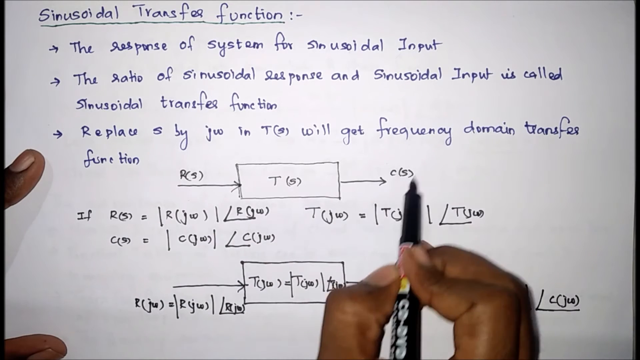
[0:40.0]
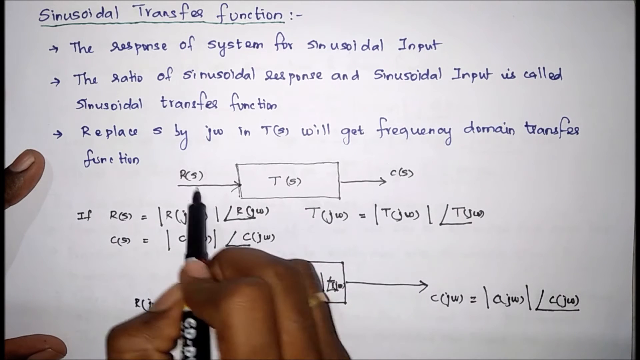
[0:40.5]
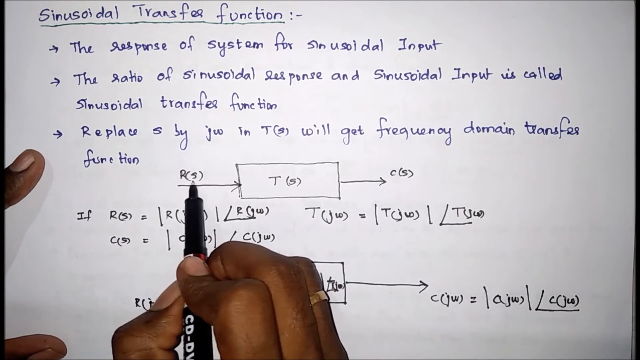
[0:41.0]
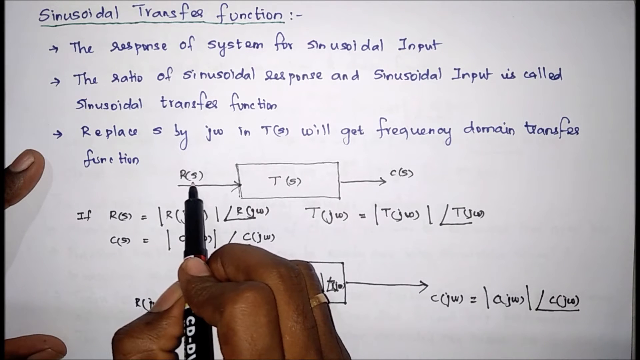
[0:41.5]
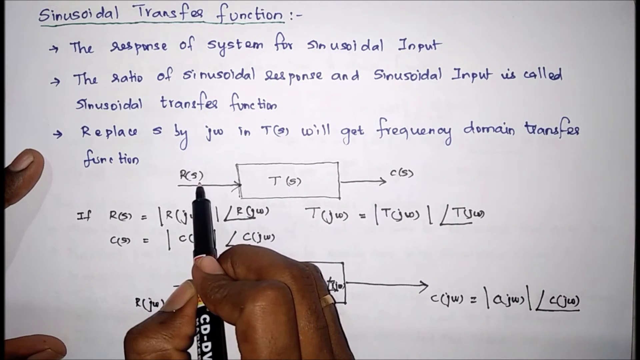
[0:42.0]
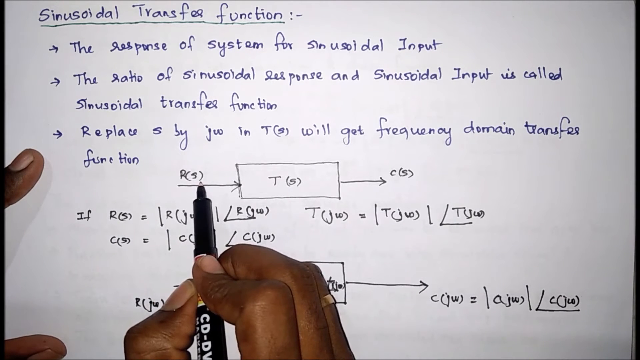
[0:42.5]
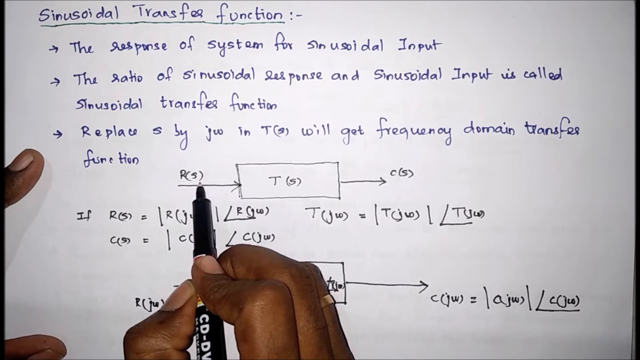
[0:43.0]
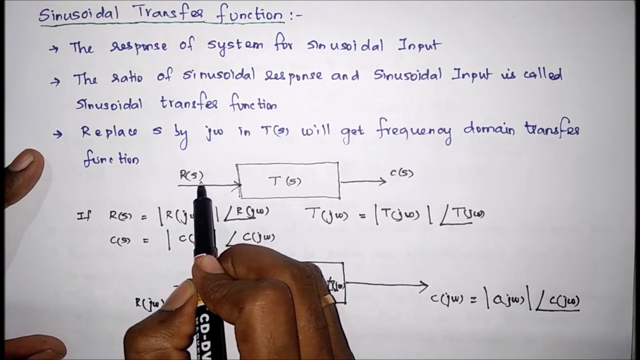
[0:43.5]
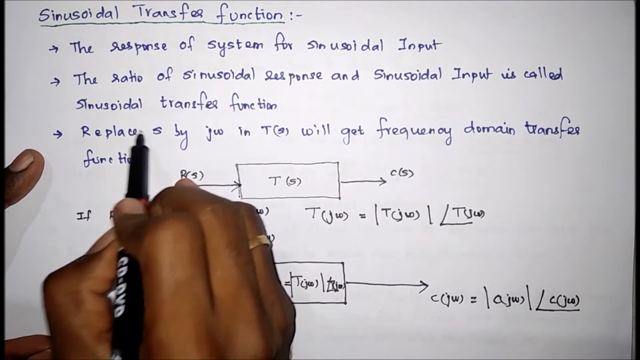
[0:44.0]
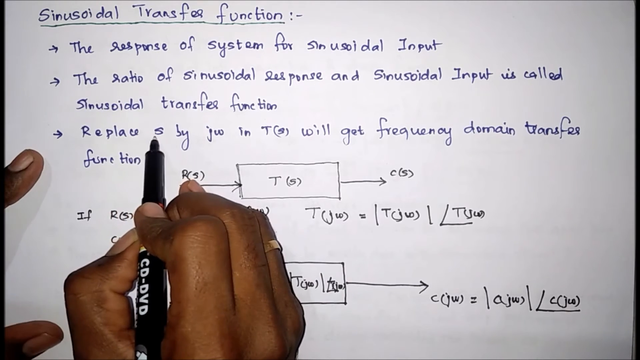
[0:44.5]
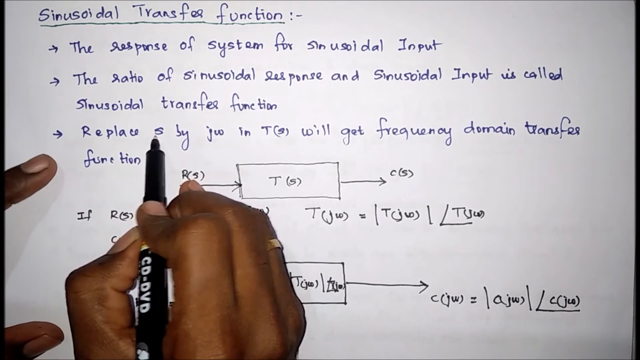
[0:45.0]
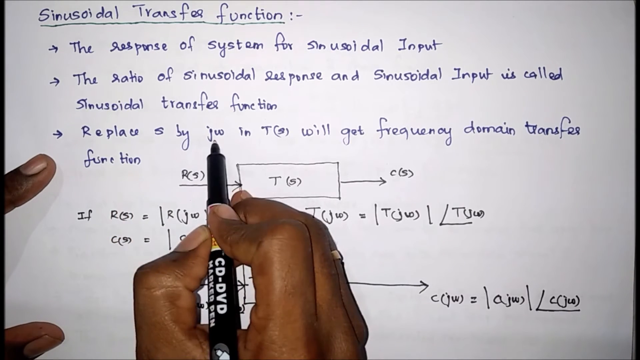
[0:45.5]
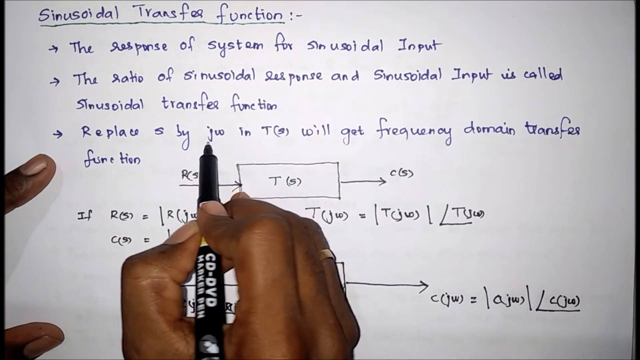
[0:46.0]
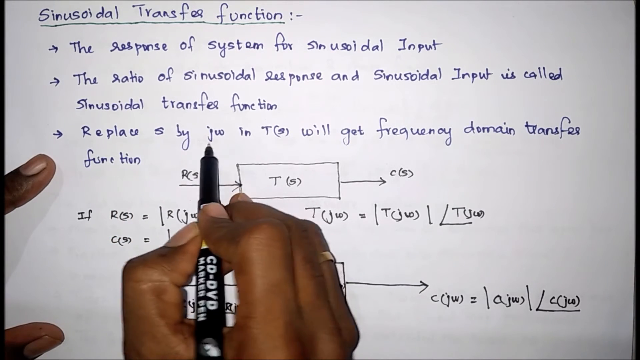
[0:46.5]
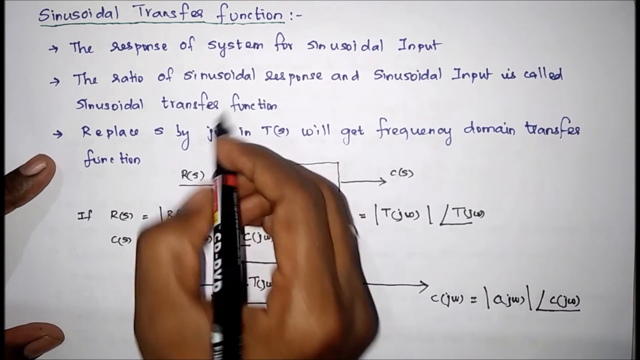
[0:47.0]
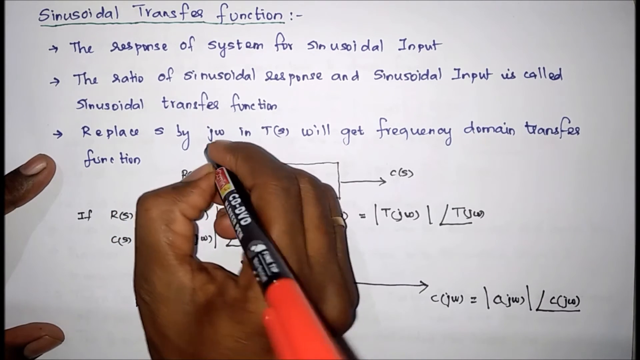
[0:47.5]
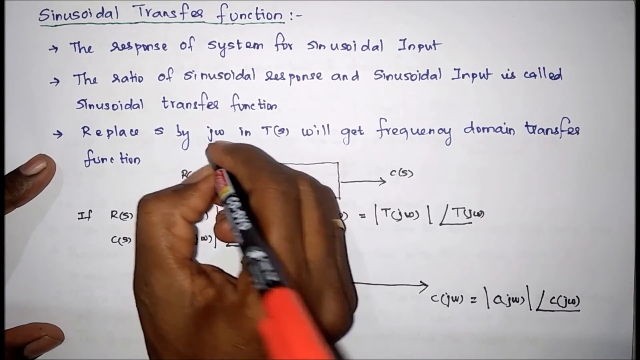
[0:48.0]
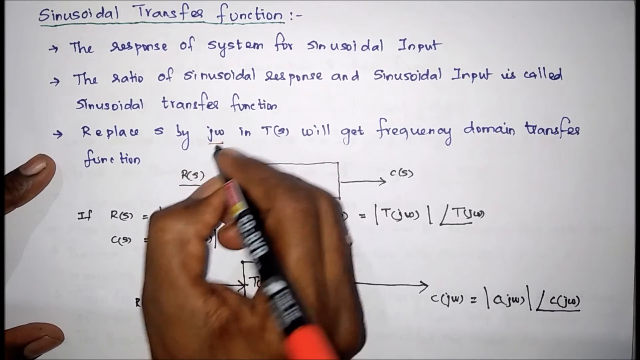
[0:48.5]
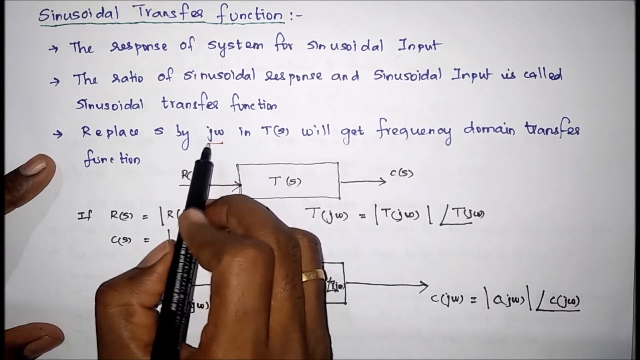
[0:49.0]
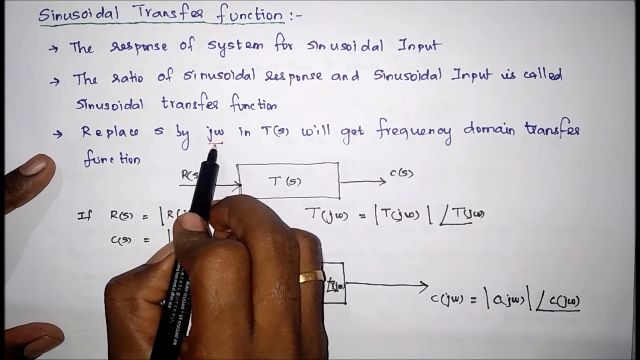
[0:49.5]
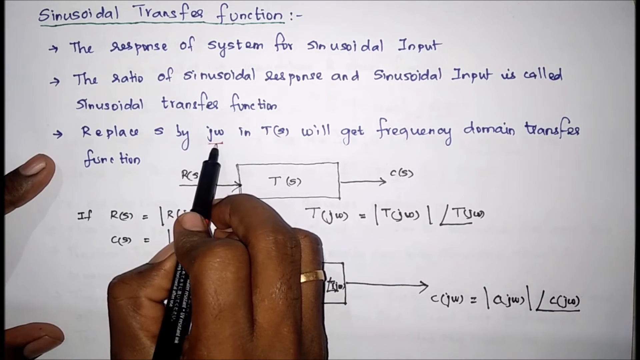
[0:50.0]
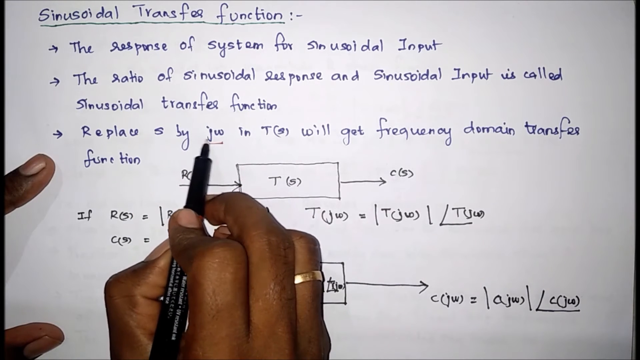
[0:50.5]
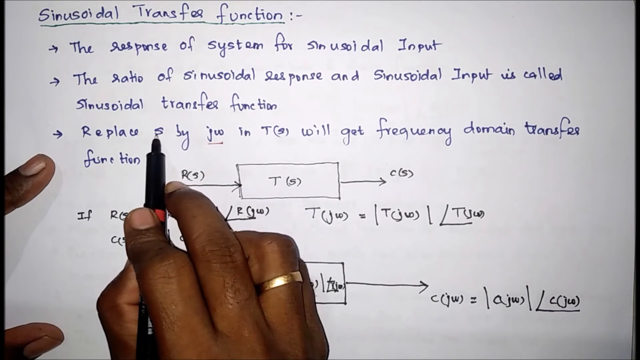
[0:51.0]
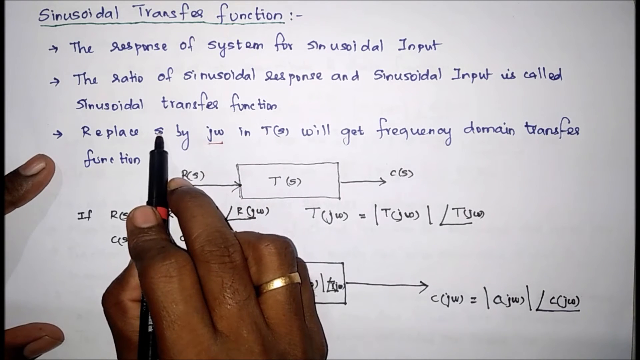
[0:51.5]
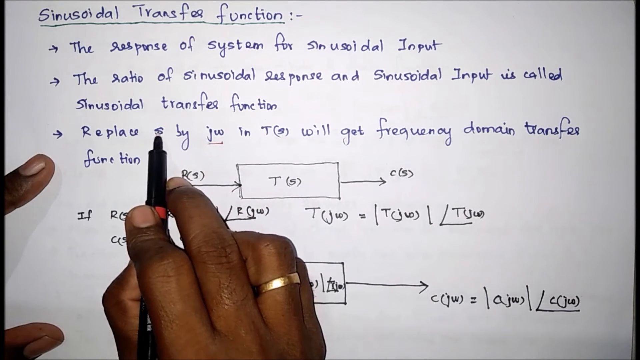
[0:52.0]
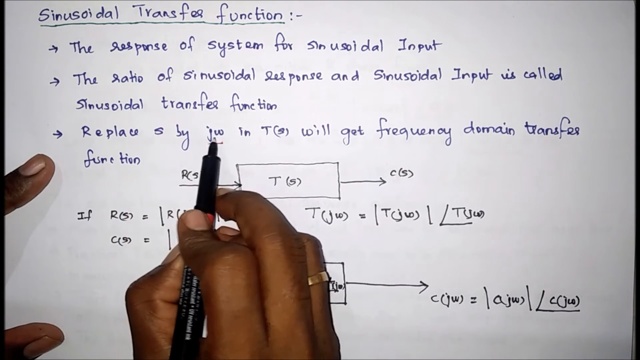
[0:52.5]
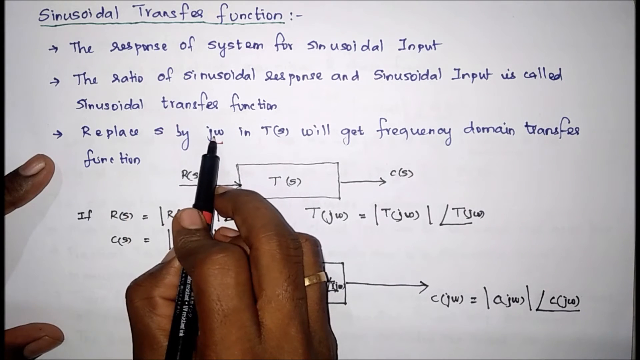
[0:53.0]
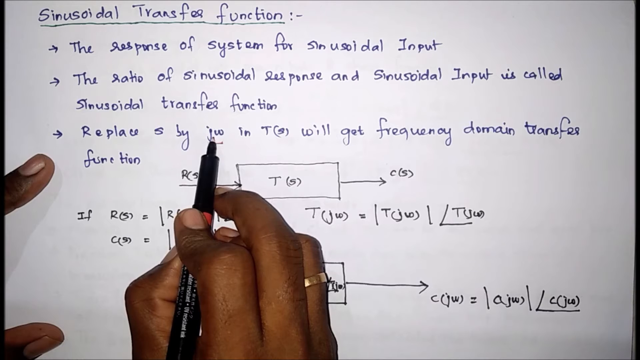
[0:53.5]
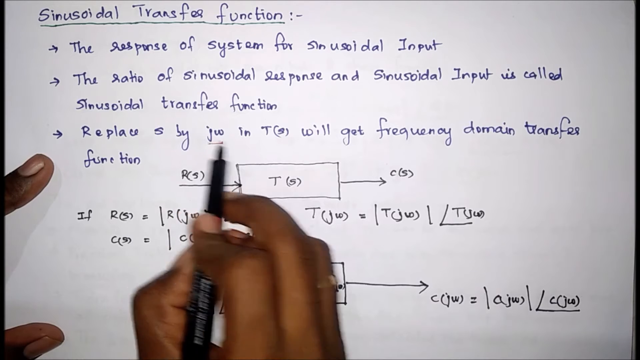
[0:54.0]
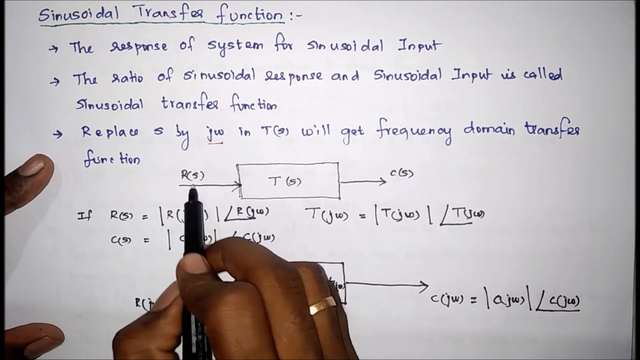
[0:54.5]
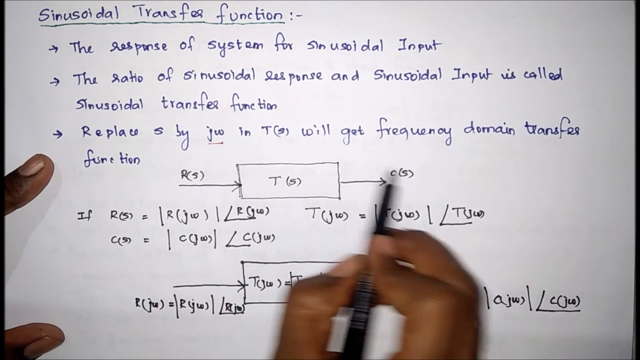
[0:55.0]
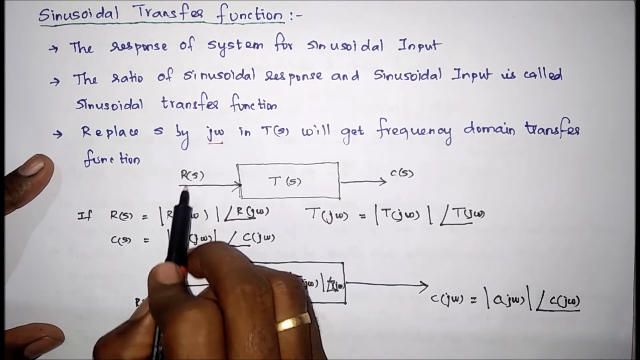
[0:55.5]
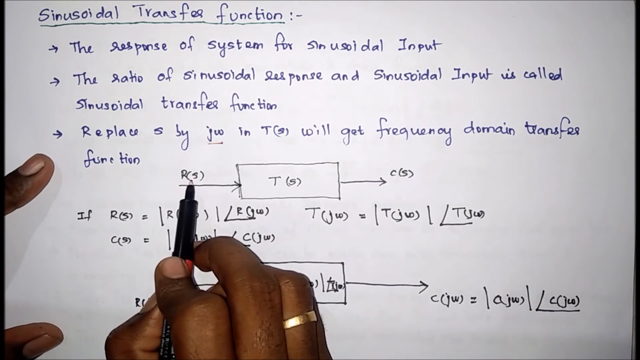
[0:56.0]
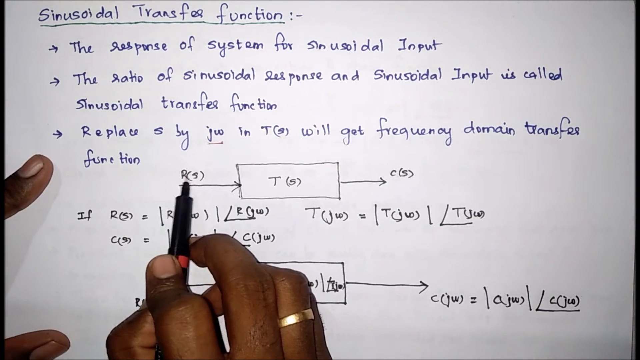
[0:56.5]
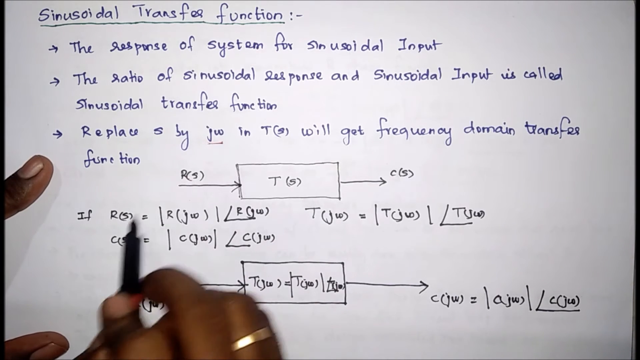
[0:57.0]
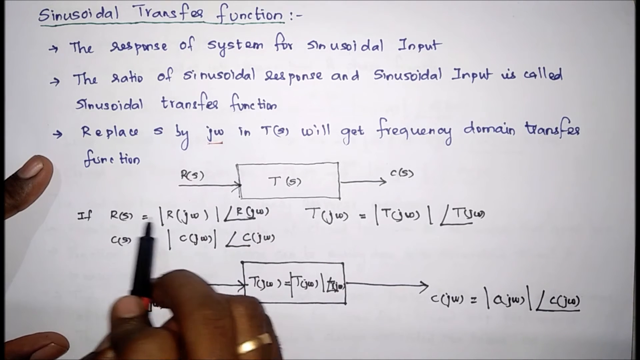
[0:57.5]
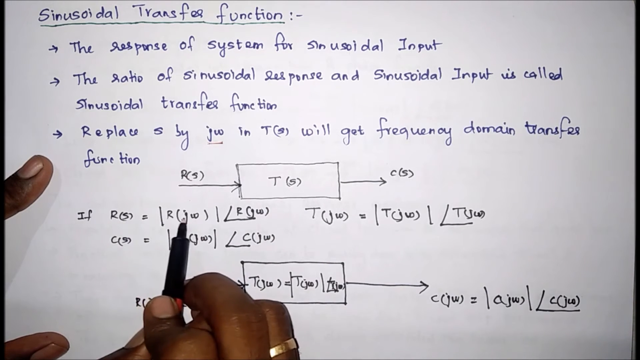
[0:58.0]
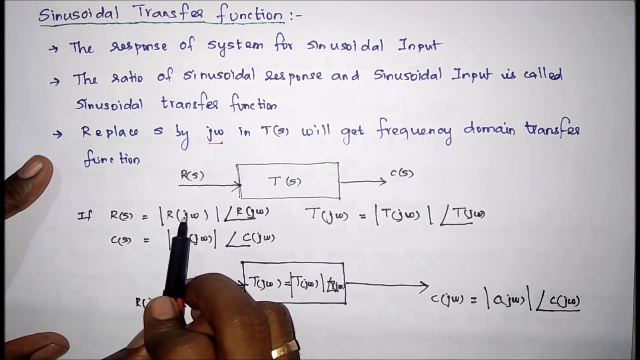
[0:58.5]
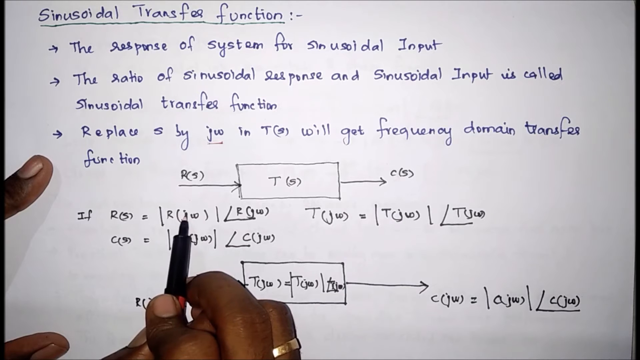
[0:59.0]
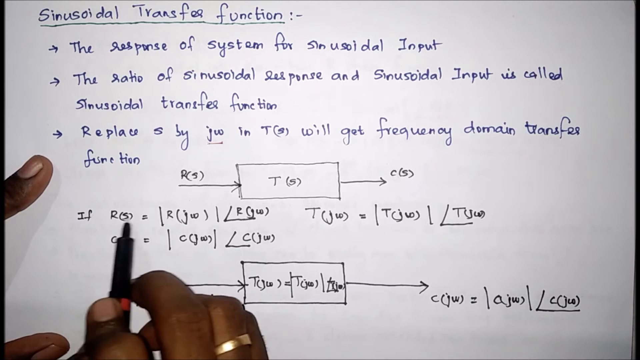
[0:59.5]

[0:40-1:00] The hand of a black person wearing a ring holds a black pen and appears to be explaining a concept handwritten on a note, which seems to be on paper and written in both blue and black pen. The pen is in the right hand, while some fingers of the left hand are only partially visible. The person underlines the variable "jw" in the third item of the bulleted list under the title, a statement that reads "Replace 's' by 'jw' in 'T(s)' will get frequency domain transfer function." The note is titled "Sinusoidal Transfer Function." In the middle of the note is a diagram showing a variable P(s) going into possibly a reaction, T(s), and coming out as C(s), illustrated with an input arrow, a rectangle, and an output arrow.